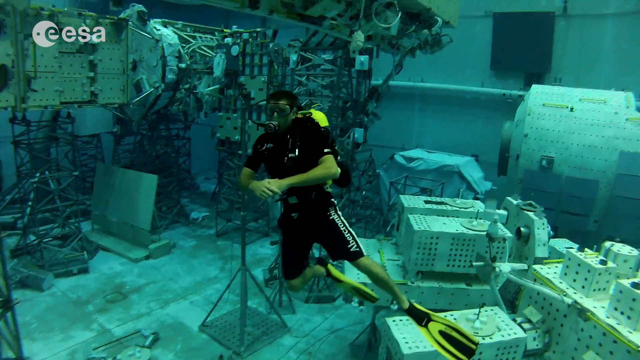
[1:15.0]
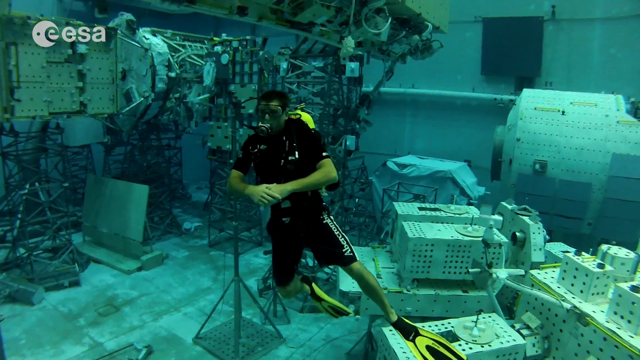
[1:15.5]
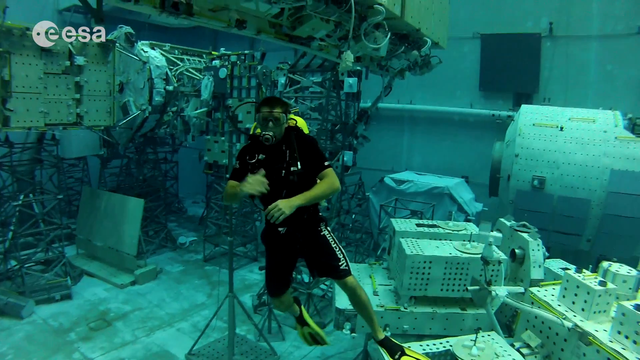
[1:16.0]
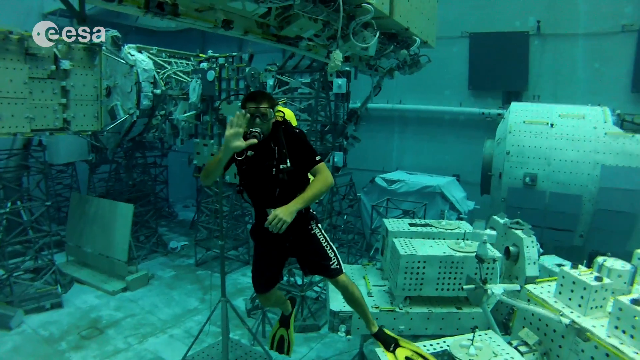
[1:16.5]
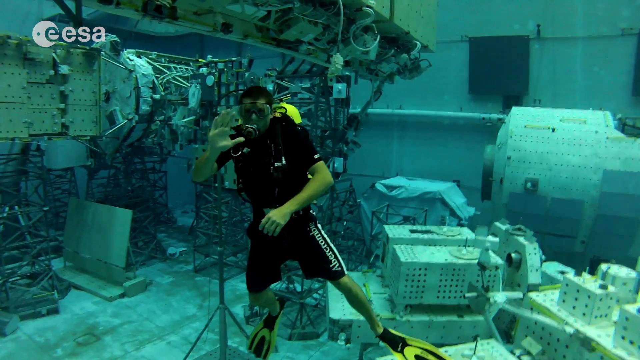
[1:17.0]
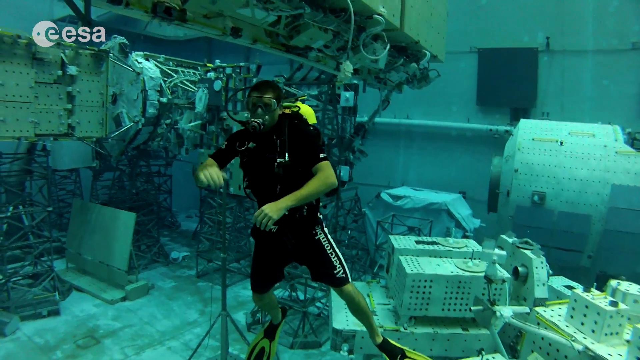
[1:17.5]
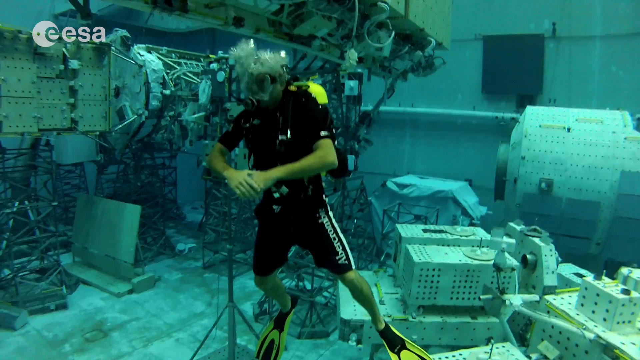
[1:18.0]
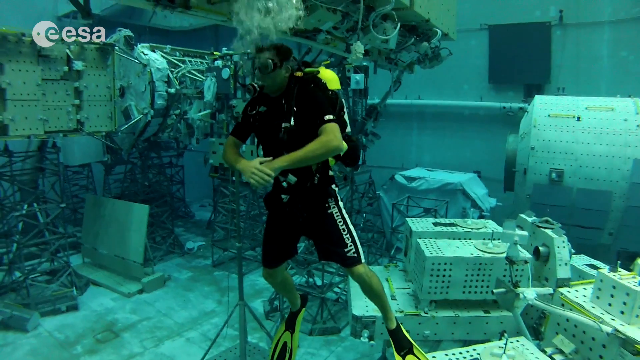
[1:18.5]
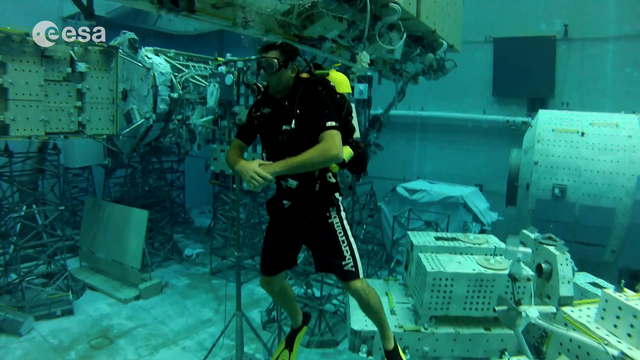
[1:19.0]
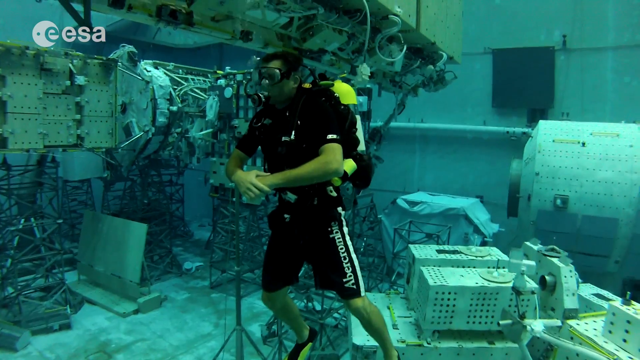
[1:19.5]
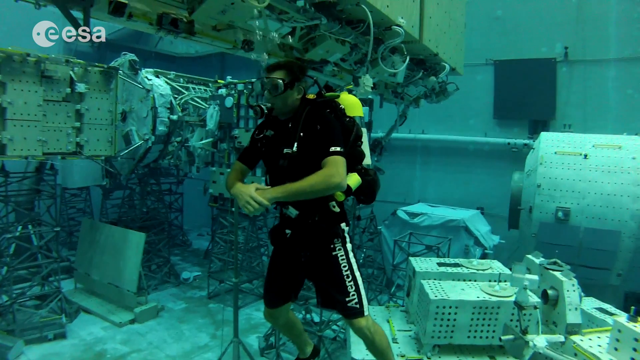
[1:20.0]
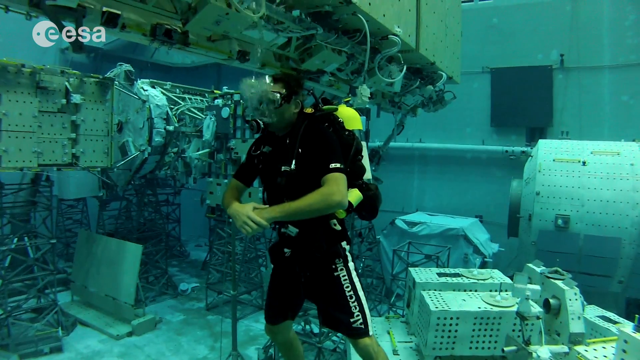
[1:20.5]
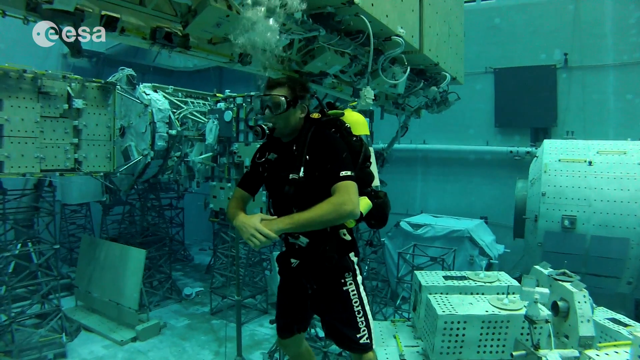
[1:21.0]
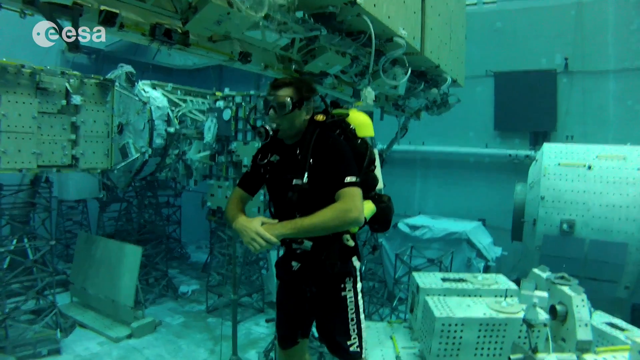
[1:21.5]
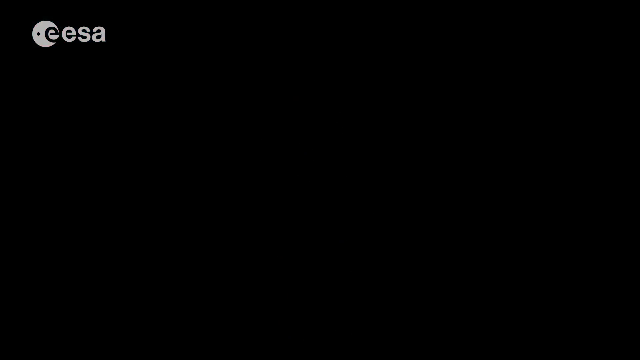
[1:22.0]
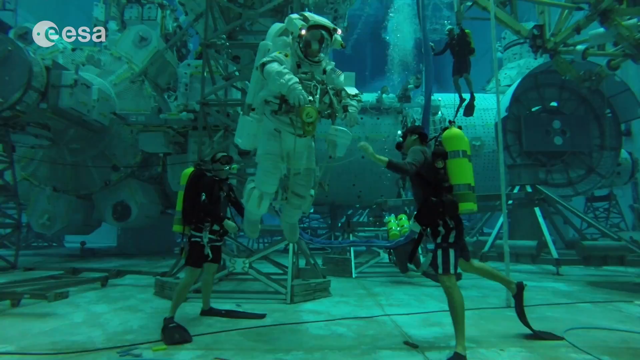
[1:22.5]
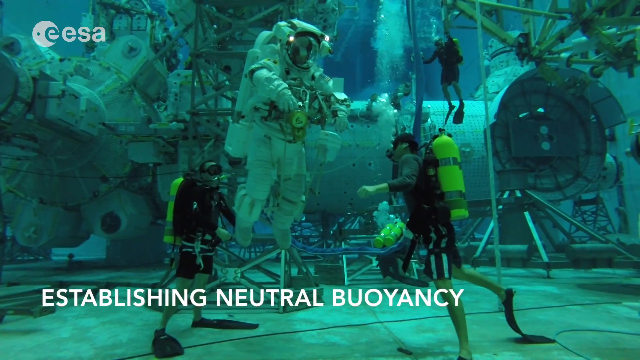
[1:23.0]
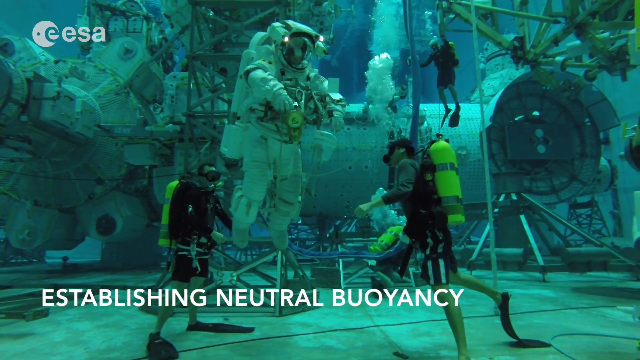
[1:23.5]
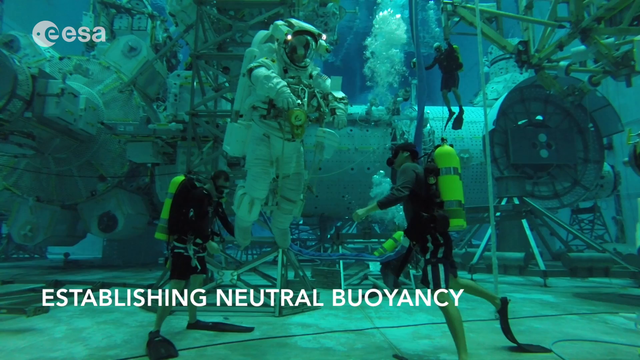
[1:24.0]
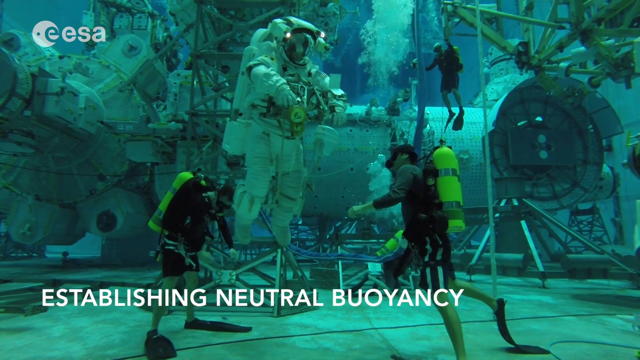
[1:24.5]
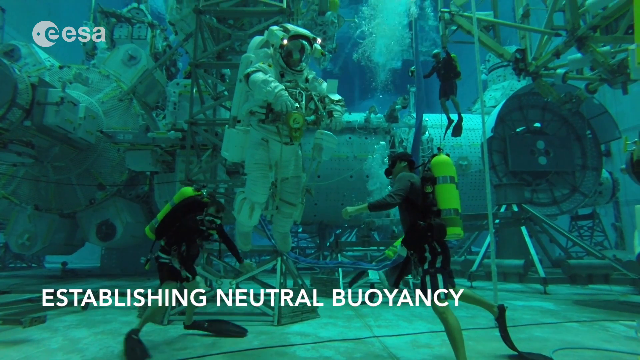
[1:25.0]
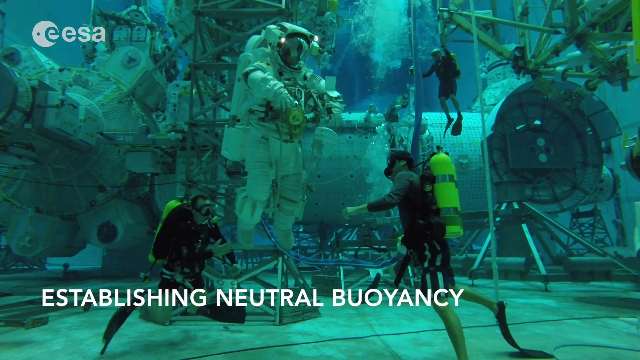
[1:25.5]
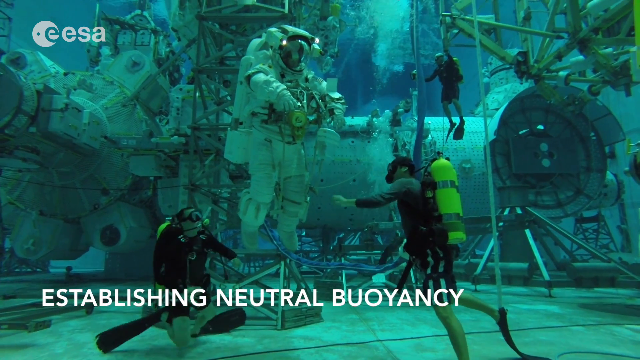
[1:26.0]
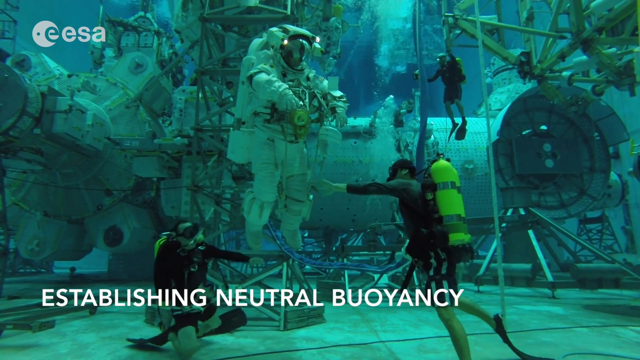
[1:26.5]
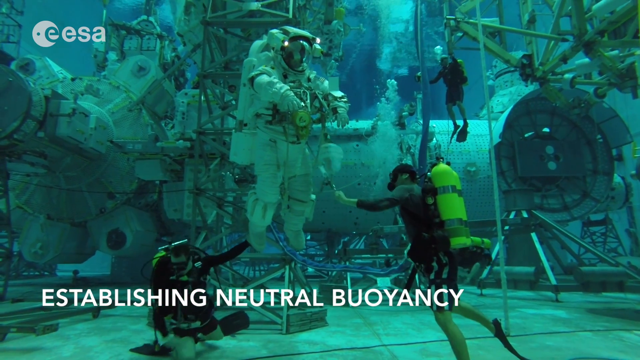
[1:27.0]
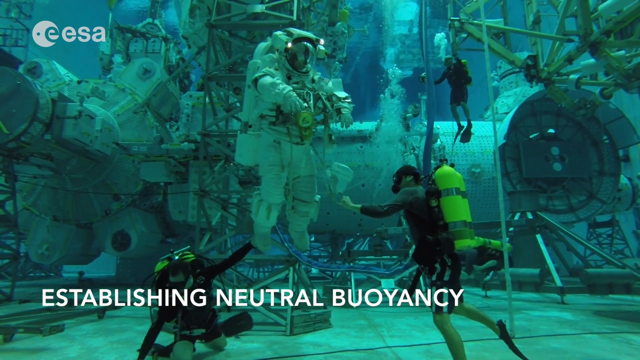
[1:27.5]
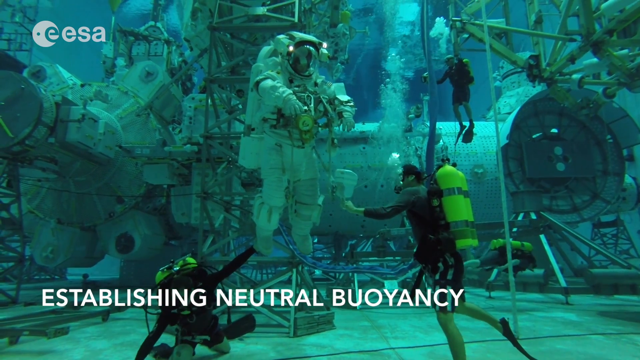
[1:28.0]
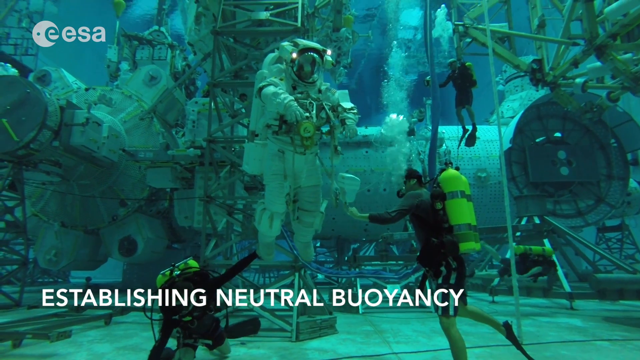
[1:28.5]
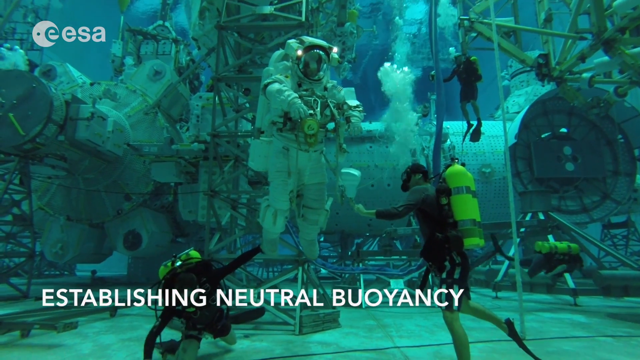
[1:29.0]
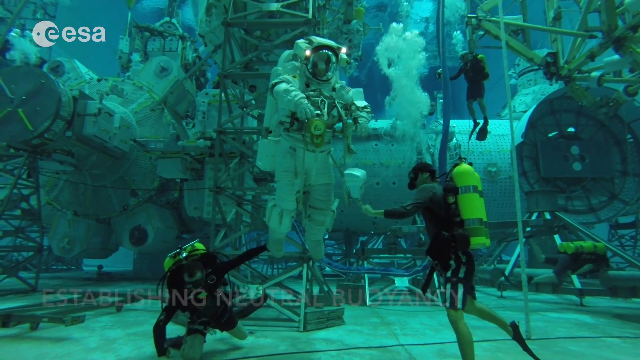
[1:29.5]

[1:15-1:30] The diver sort of swims in one area, gives a palm-up gesture that seems to be a scuba diving sign, and rests his hands on top of each other. The scene changes, and text reads "establishing neutral buoyancy". Scuba divers surround a person in a full astronaut suit who floats with his hands out in front of him, somewhat like a zombie. The divers sort of swim around, looking and checking things. The astronaut is hooked to a long blue cord that is hooked to the tanks on the back of one of the divers. Two divers work on the astronaut: one can be seen behind him and another swims under that one. A few more divers hang out in the background, and there are a lot of bubbles from all of them.